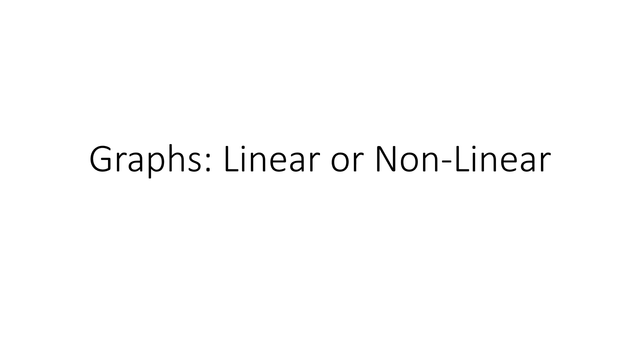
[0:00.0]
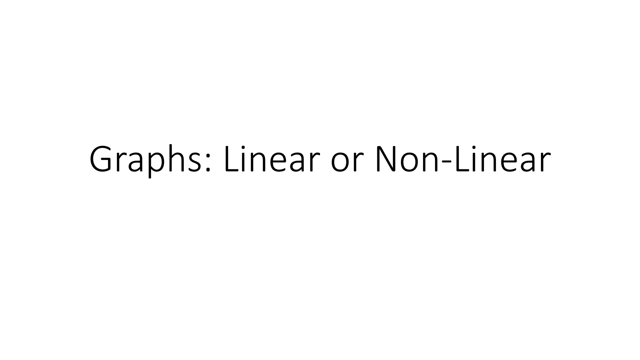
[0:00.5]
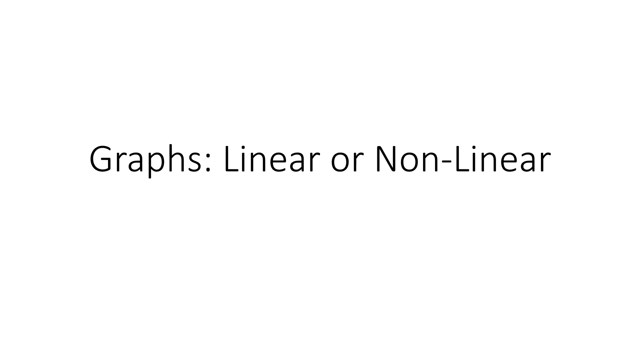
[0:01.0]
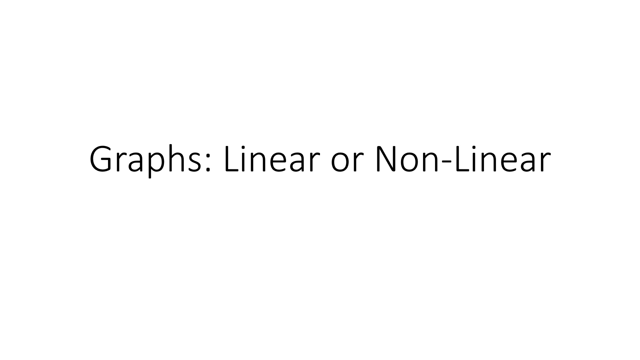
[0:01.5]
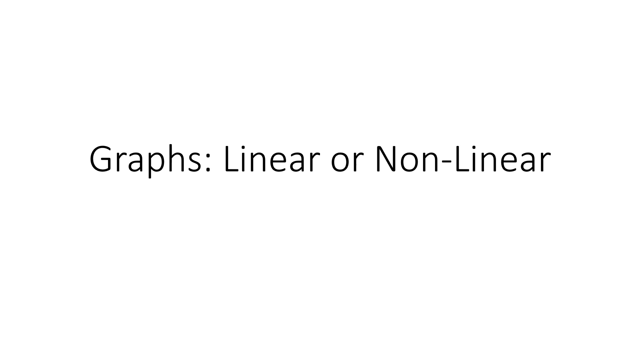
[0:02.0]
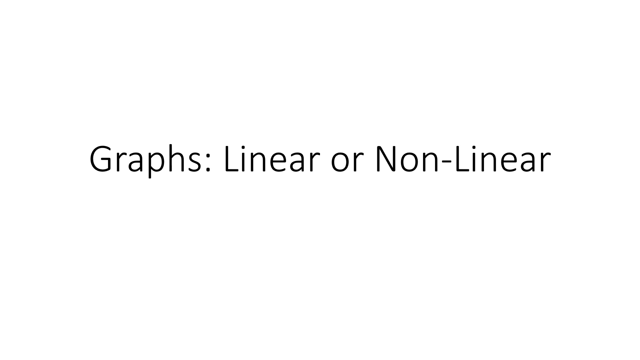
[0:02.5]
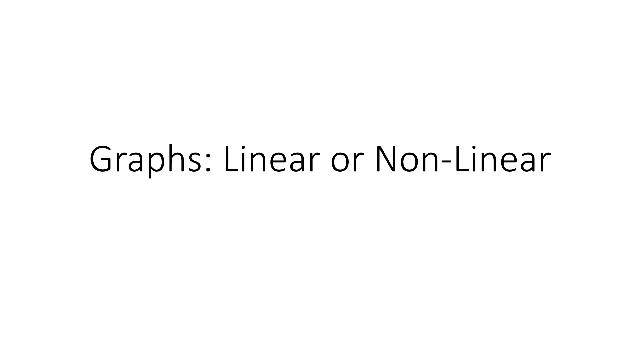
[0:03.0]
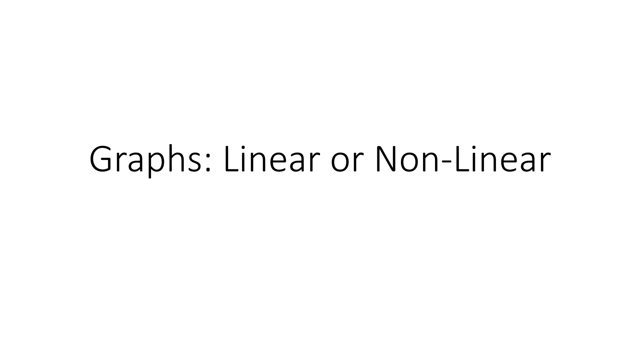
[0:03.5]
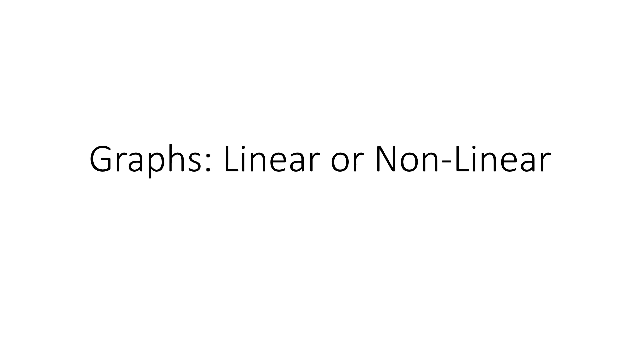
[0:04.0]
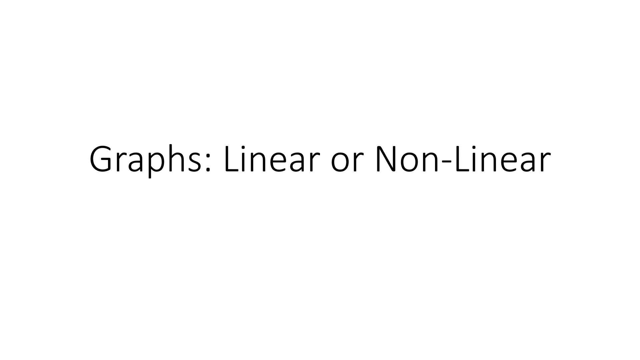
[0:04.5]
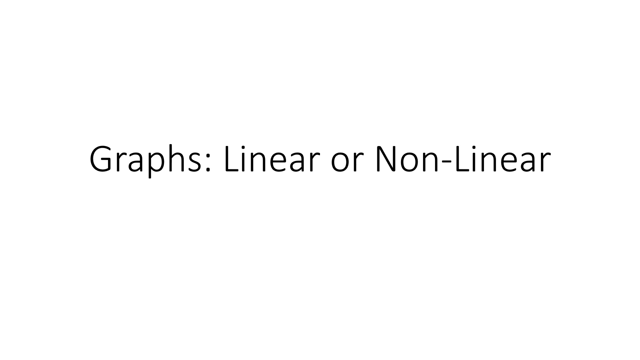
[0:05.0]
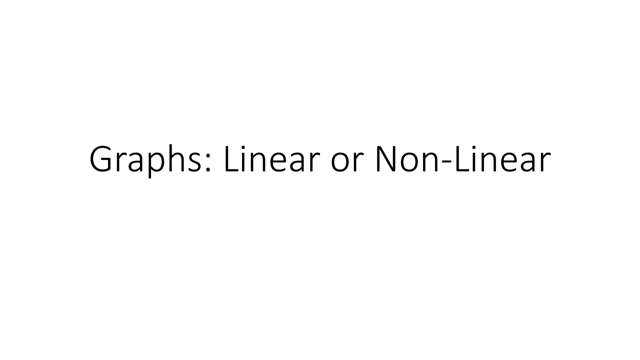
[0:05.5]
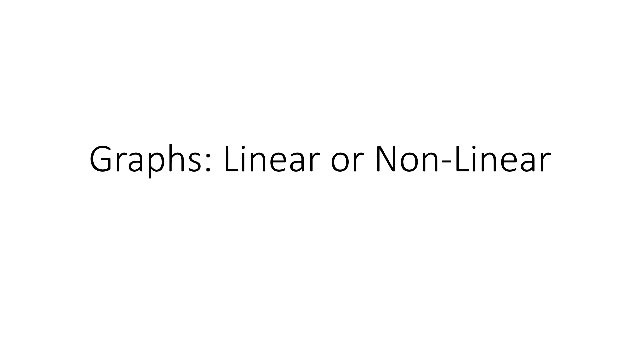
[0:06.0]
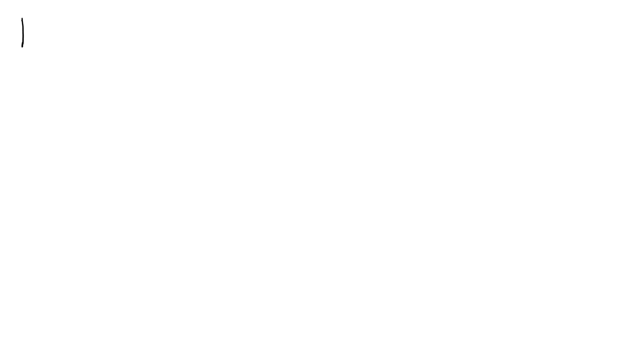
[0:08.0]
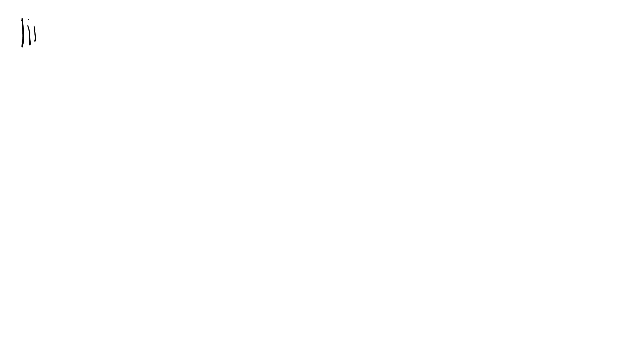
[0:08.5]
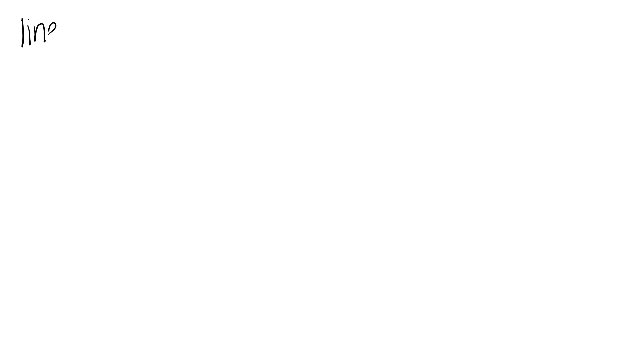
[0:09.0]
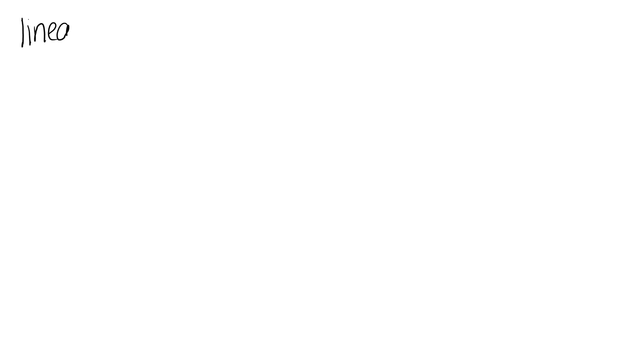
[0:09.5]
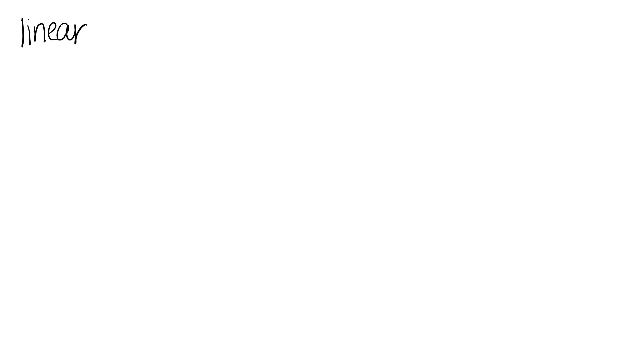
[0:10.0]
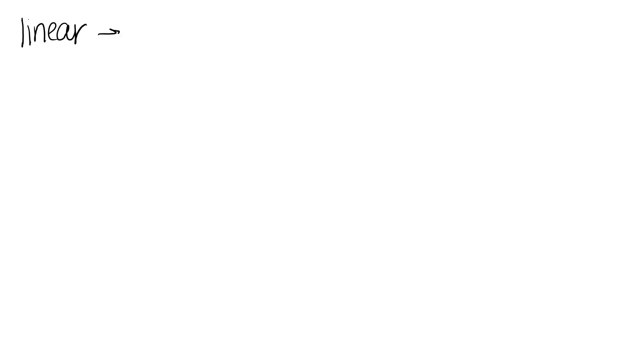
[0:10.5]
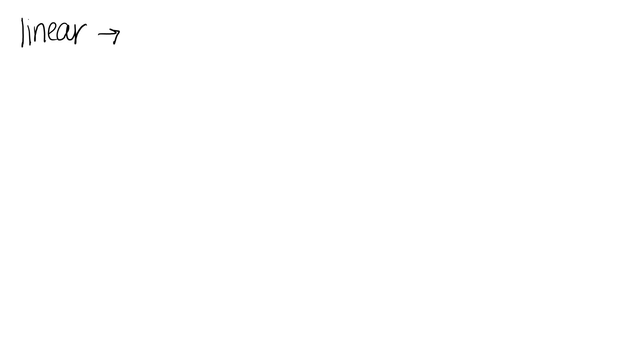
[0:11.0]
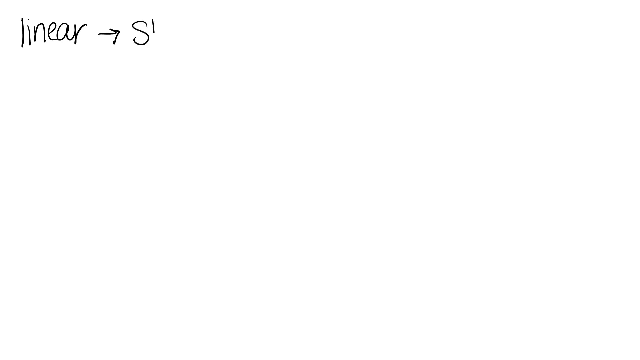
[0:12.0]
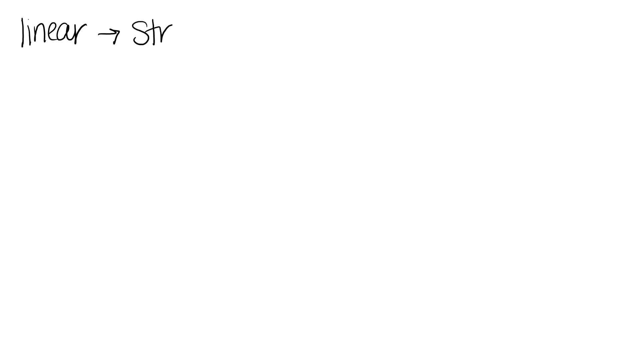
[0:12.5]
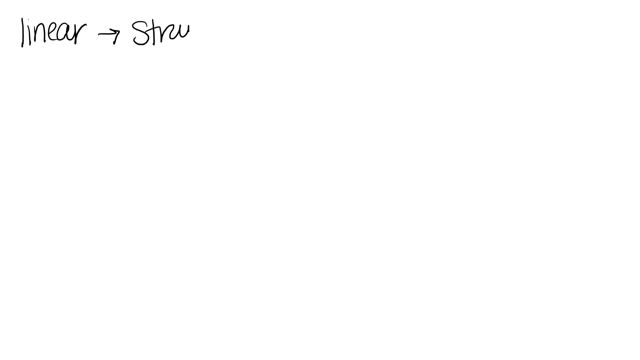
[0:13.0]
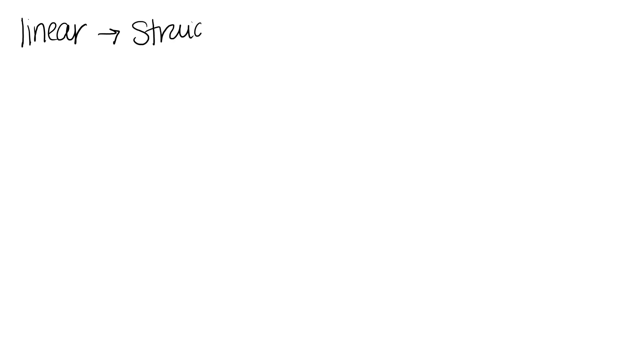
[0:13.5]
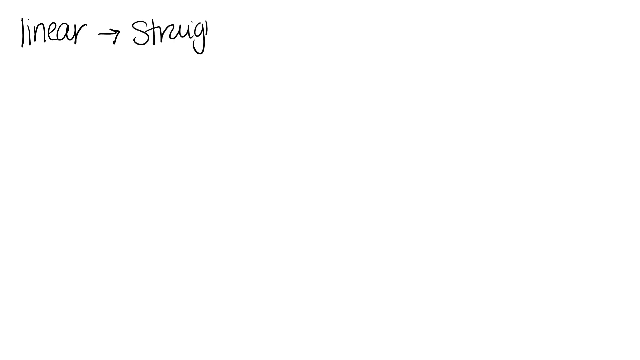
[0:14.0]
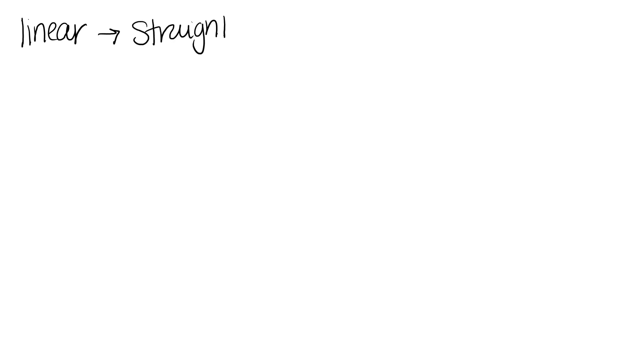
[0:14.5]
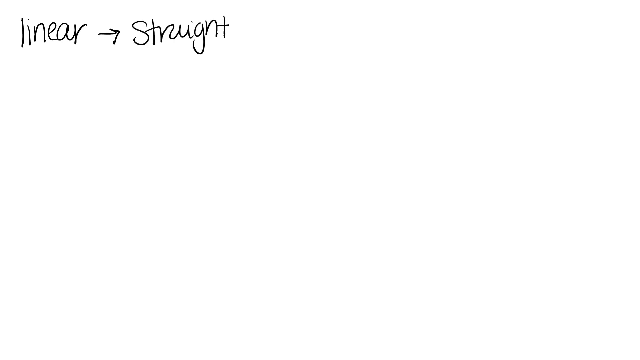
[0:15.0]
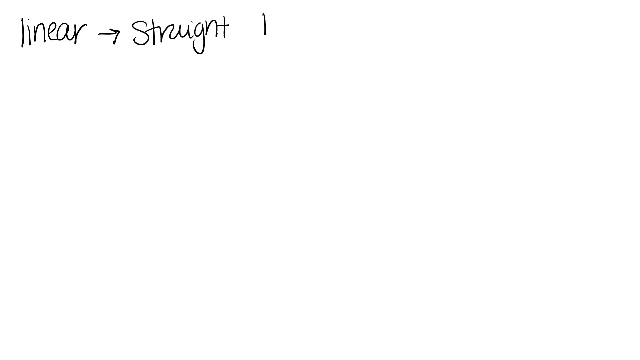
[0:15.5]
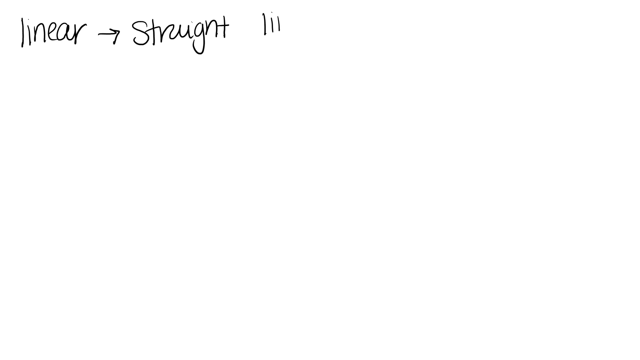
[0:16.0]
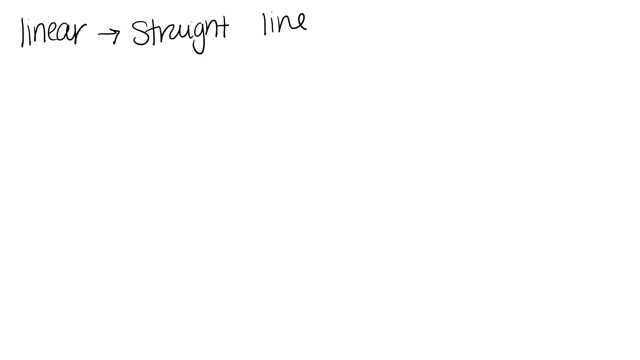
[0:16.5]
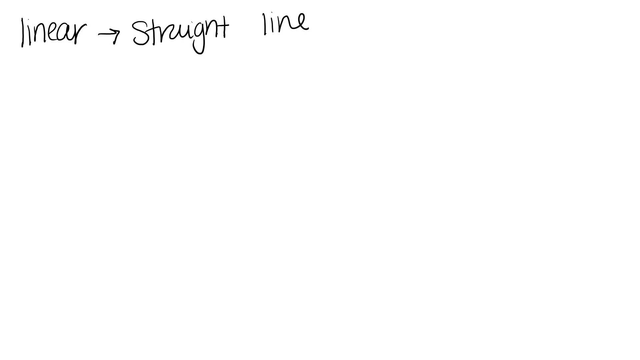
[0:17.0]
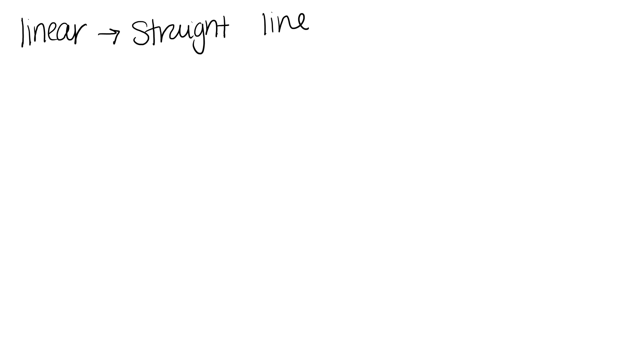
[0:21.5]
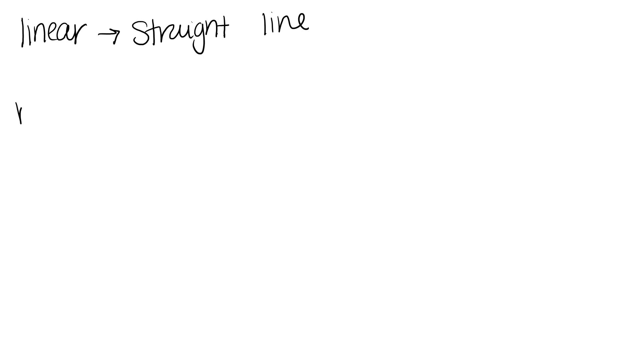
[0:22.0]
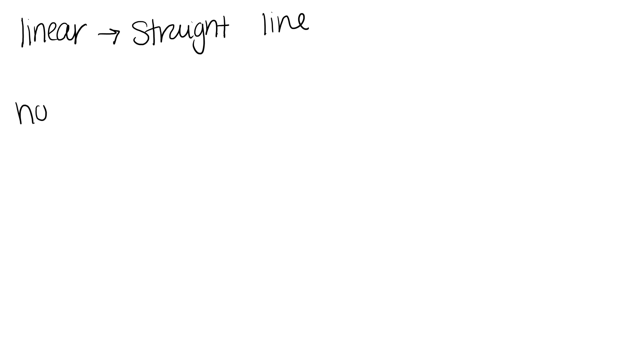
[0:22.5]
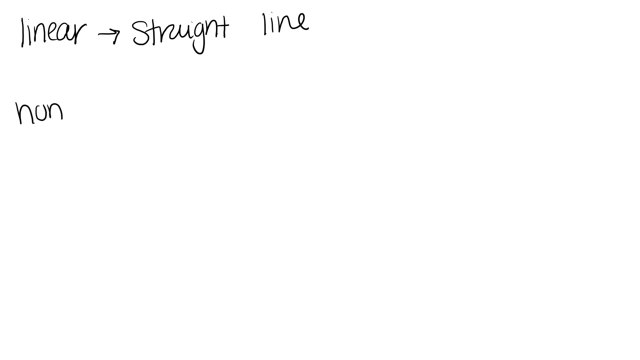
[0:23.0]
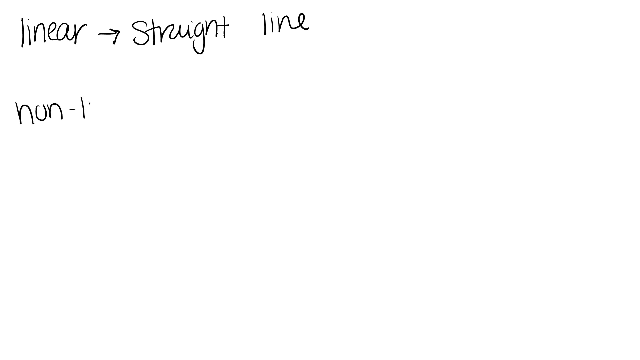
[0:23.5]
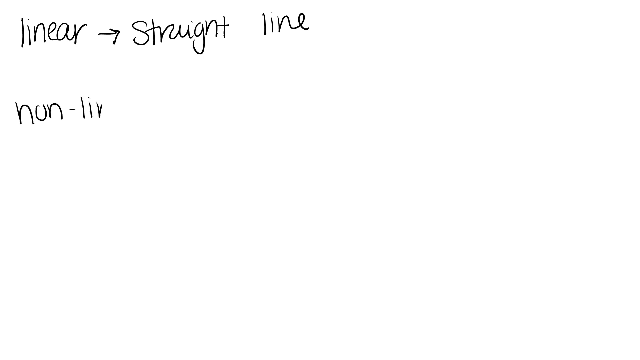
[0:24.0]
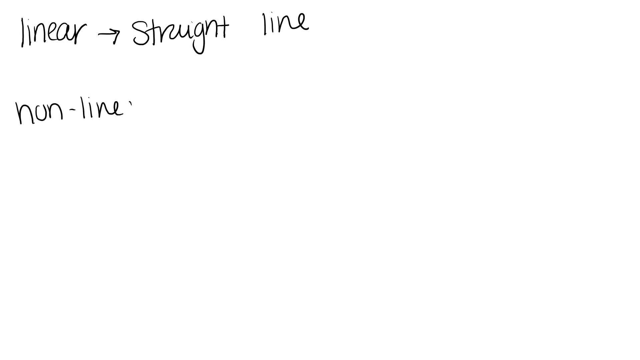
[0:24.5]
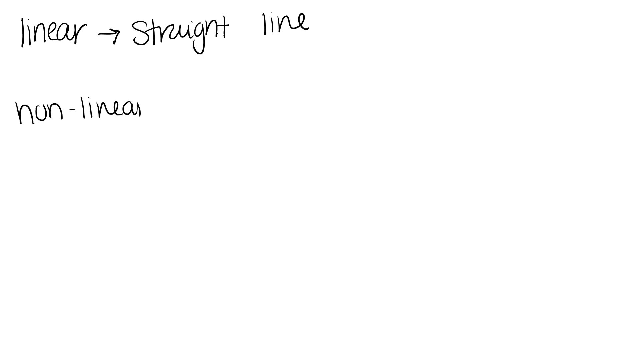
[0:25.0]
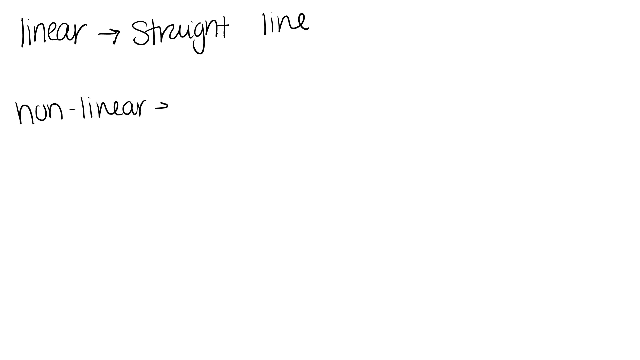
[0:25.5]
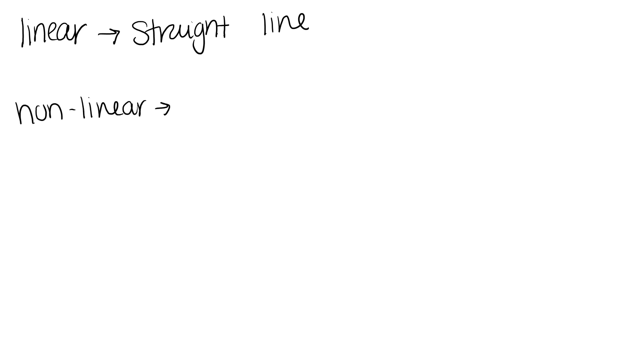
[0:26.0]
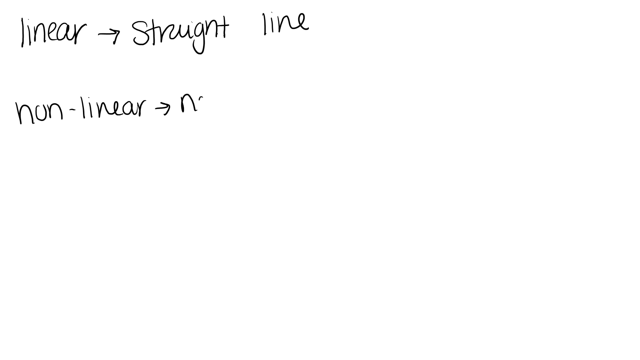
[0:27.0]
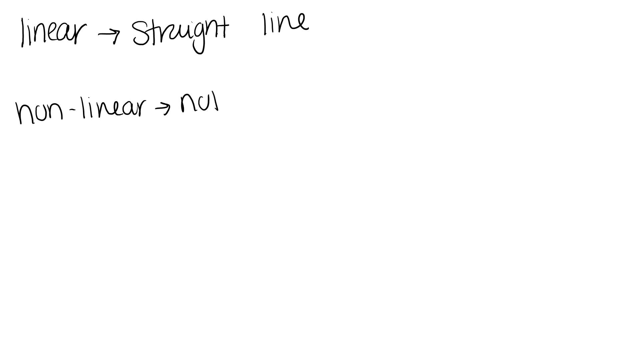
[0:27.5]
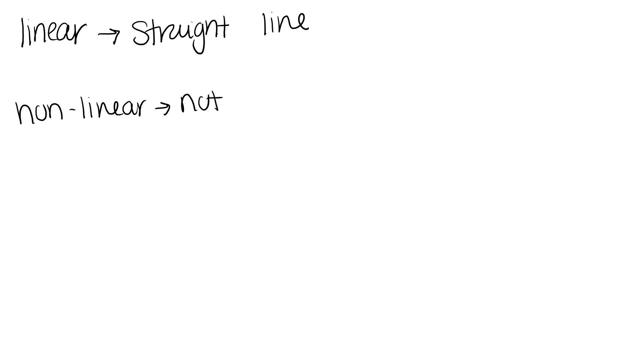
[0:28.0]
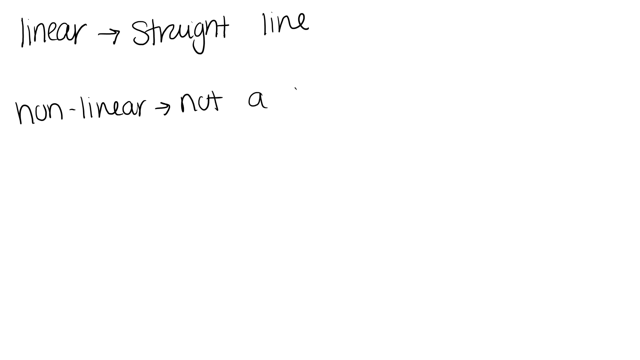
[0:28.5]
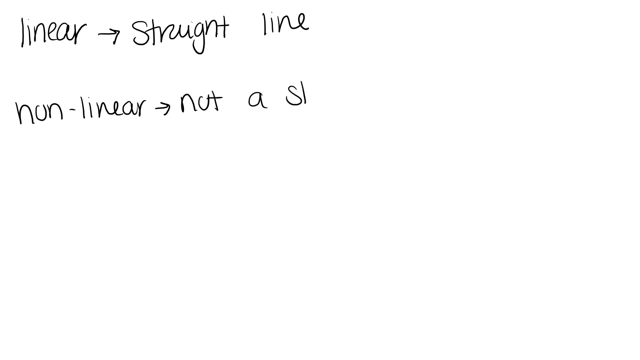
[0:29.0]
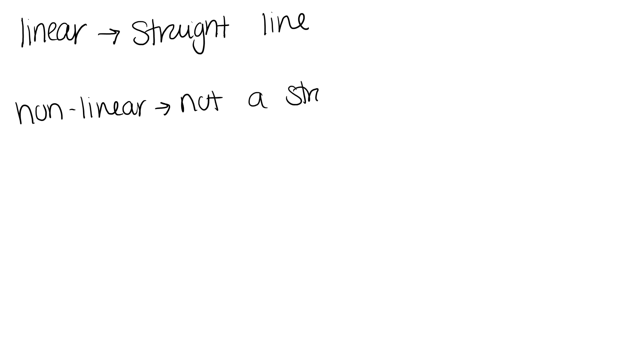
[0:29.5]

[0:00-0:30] The video is about a mathematical topic: graphs, specifically linear or non-linear graphs. It starts with a white background showing the typed title "graphs, linear or non-linear graphs", introducing the topic. Next comes another white background with "linear" written at the top left and an arrow with the words "linear graphs are straight line". Below that, "non-linear graphs" appears, with an arrow stating that non-linear graphs are not made of straight lines. Judging by how slowly the words appear, the person writing them seems to be using a mouse. Apart from the typed title, the headings "linear" and "non-linear", the explanations and the arrows are all handwritten.